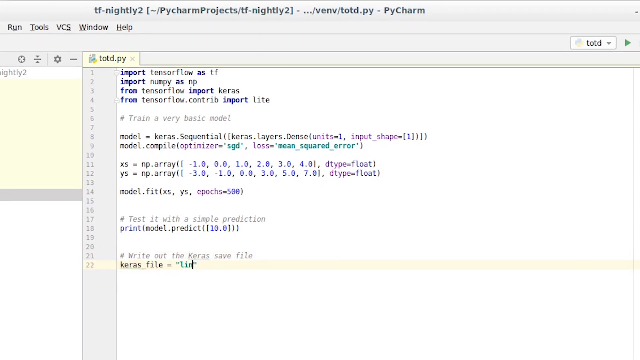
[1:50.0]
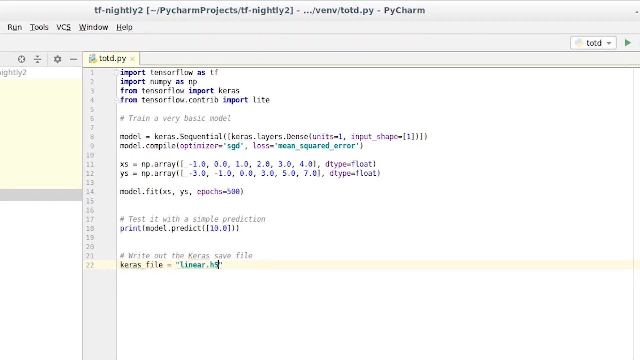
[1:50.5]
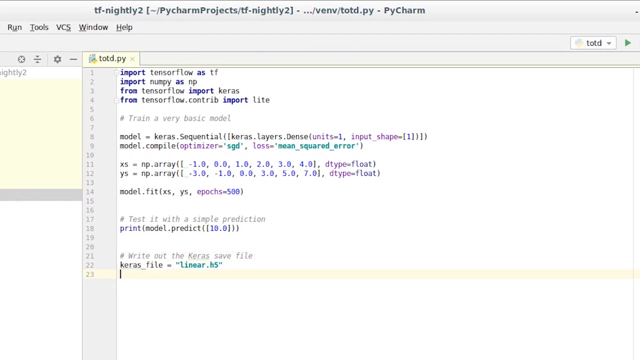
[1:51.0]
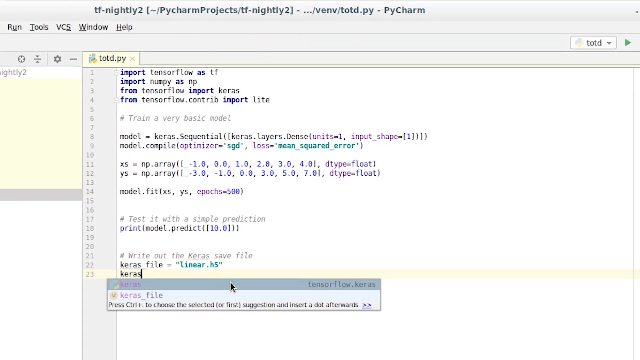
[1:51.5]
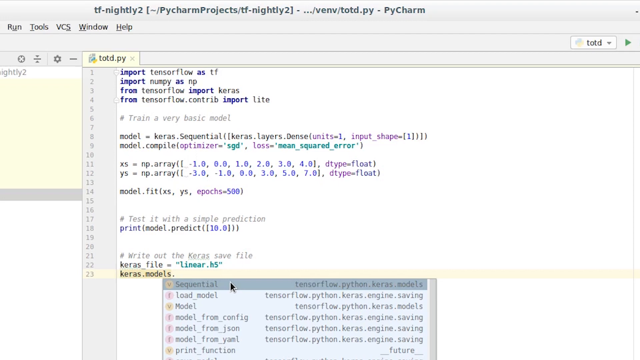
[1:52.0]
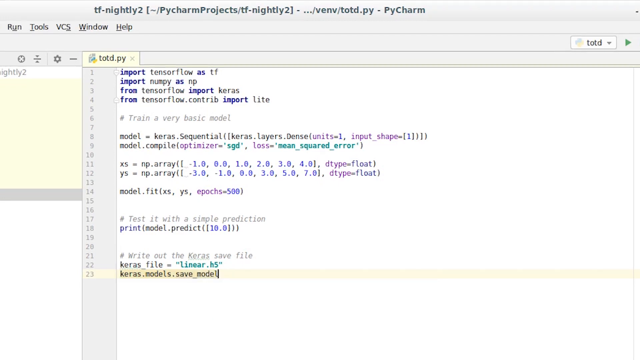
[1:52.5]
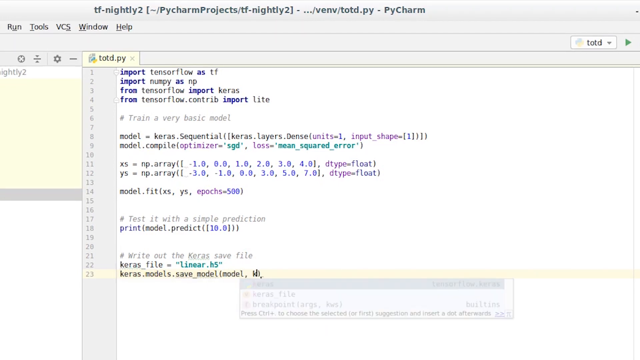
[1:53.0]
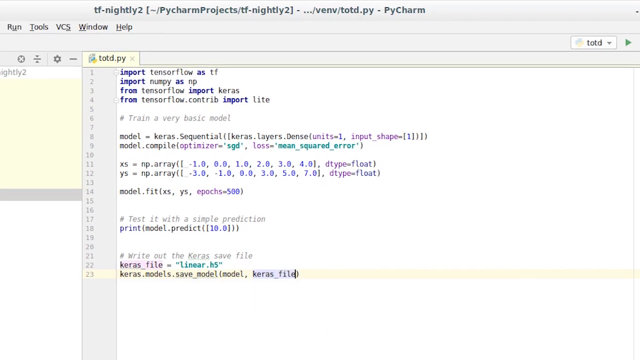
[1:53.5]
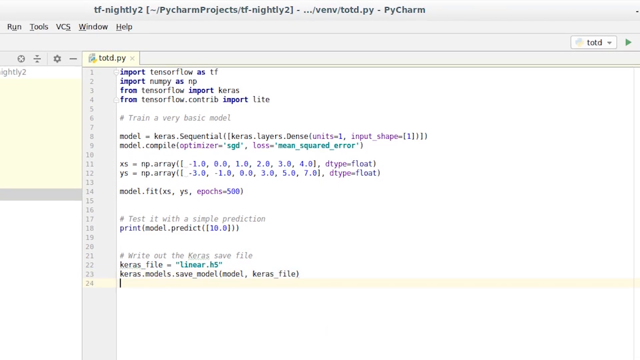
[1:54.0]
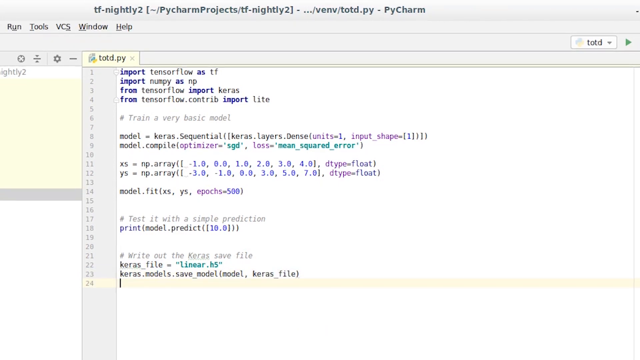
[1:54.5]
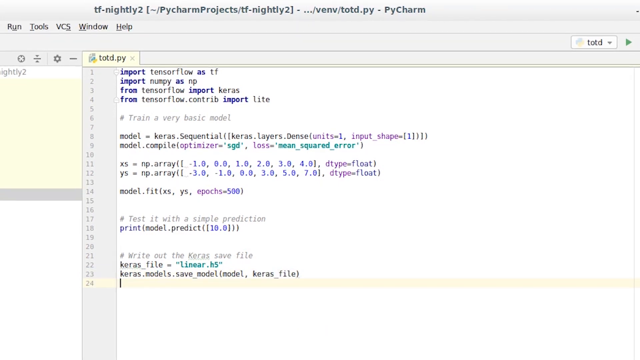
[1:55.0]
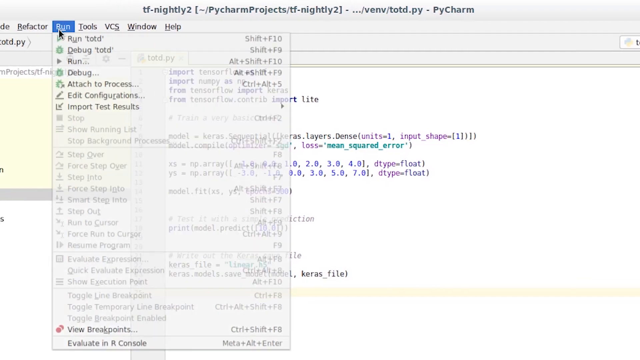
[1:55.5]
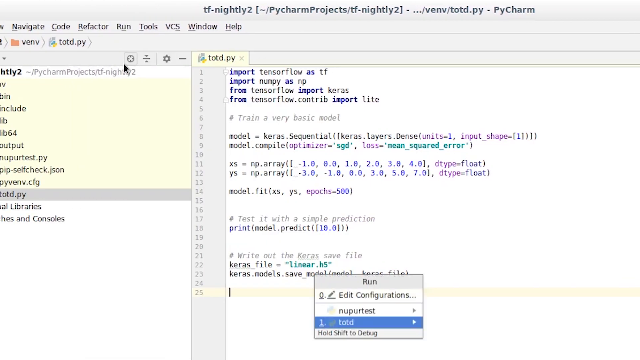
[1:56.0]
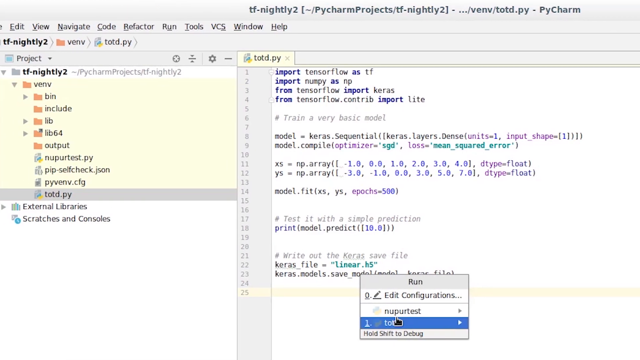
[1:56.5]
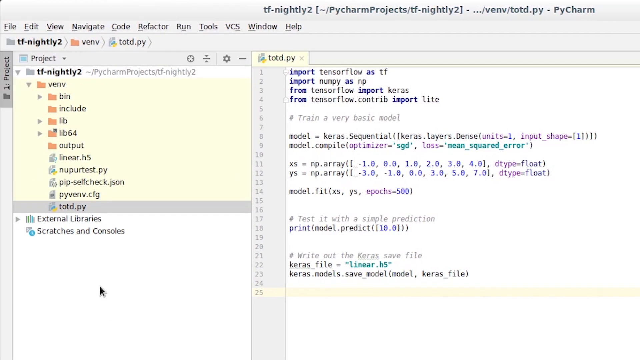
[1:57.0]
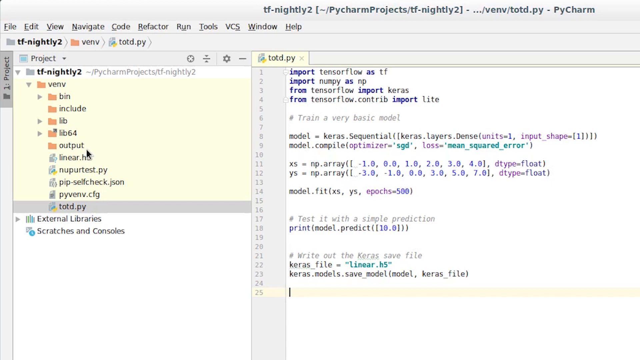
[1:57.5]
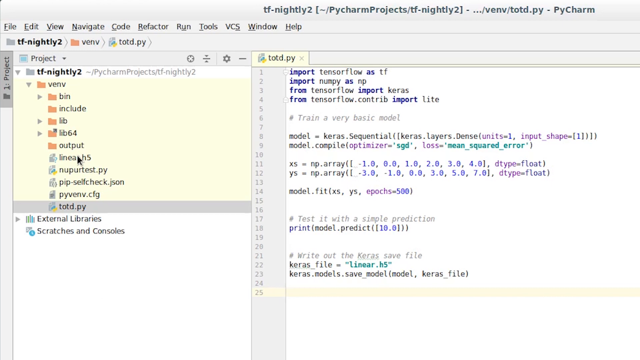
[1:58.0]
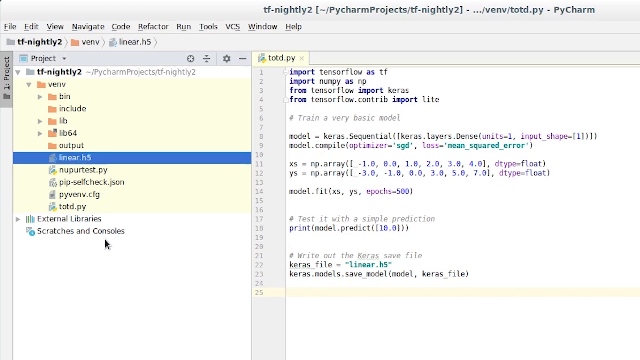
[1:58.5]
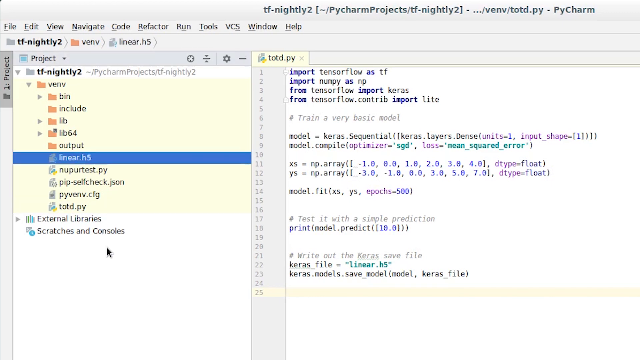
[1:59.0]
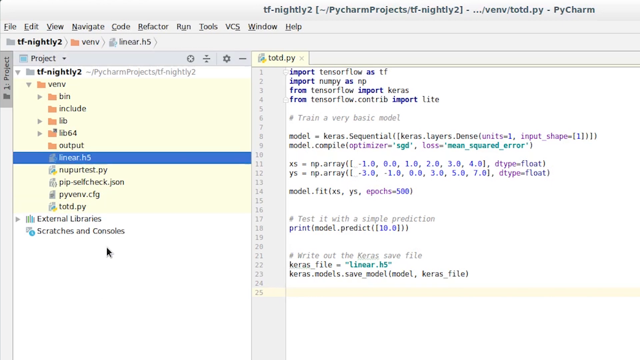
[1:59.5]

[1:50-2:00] A document page labeled "TF Nightly 2" shows code including "import tensorflow as tf" and "import numpy as np," followed by "# train a very basic model," "test it with a simple prediction" and "write out the Keras save file." Someone appears to be writing code to test it on the model. They run the tests and click on a document named "linear."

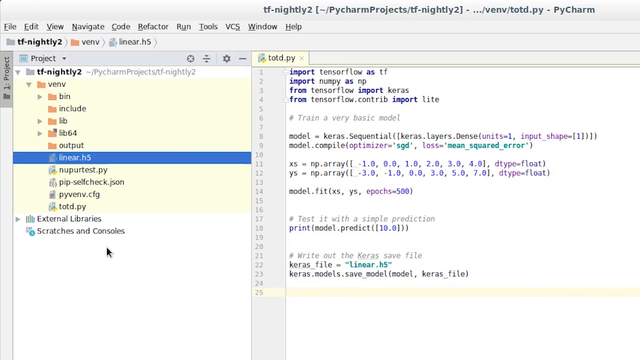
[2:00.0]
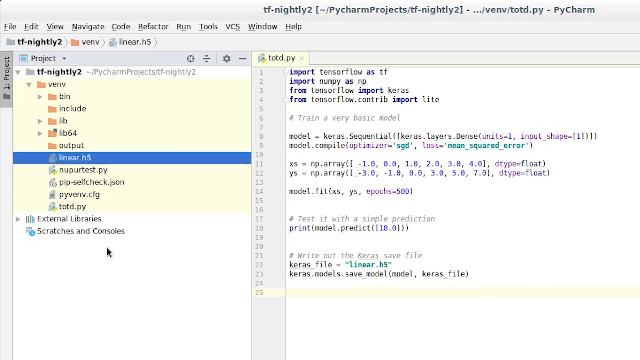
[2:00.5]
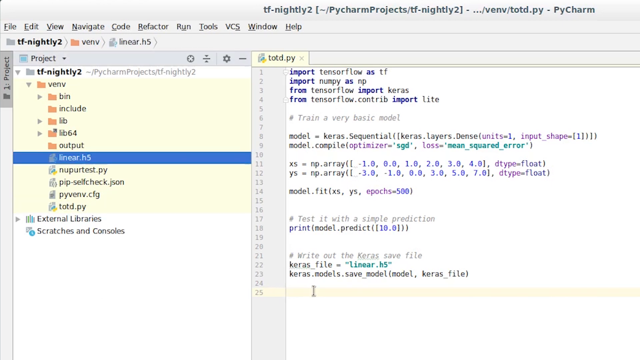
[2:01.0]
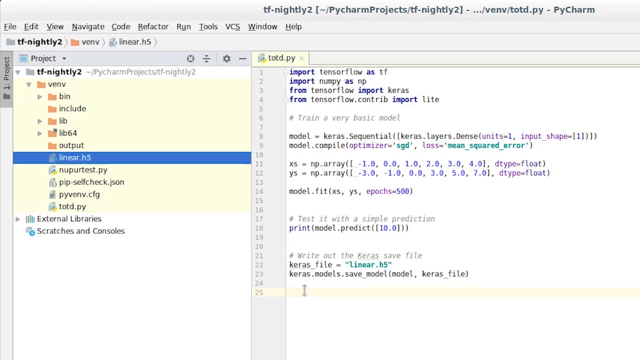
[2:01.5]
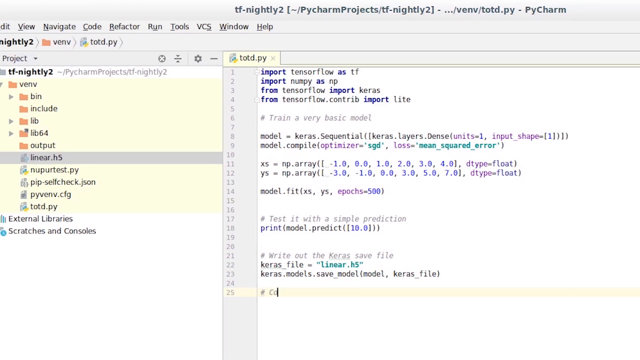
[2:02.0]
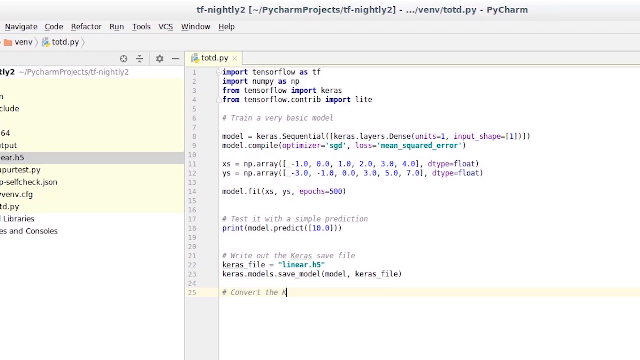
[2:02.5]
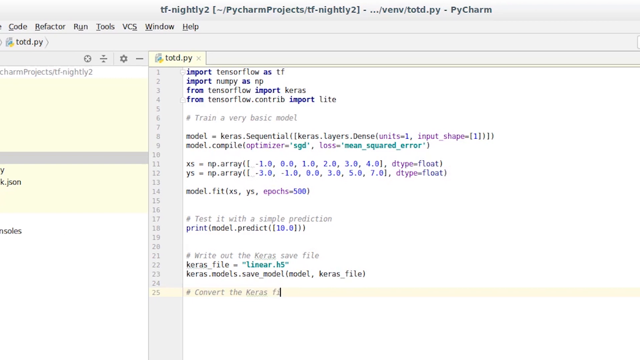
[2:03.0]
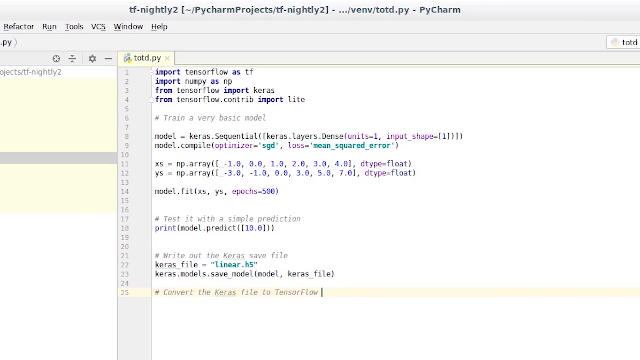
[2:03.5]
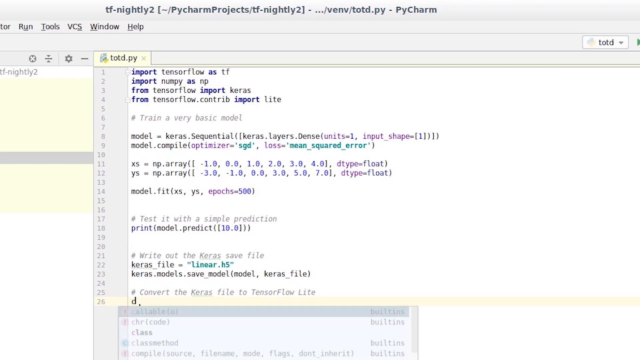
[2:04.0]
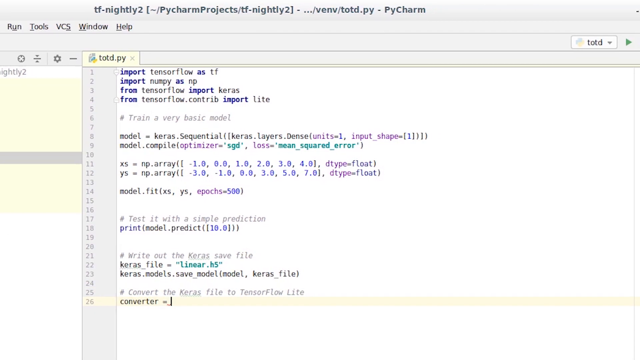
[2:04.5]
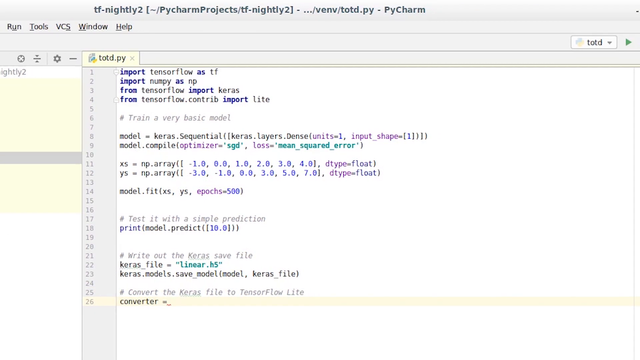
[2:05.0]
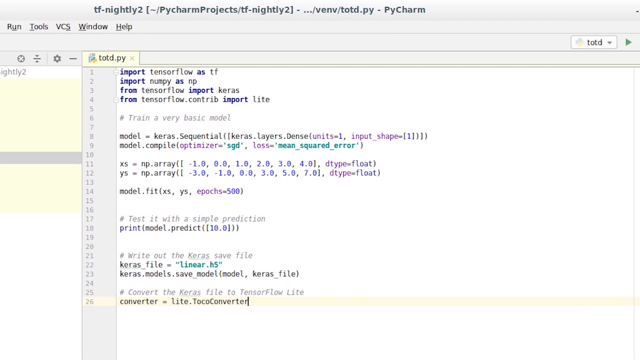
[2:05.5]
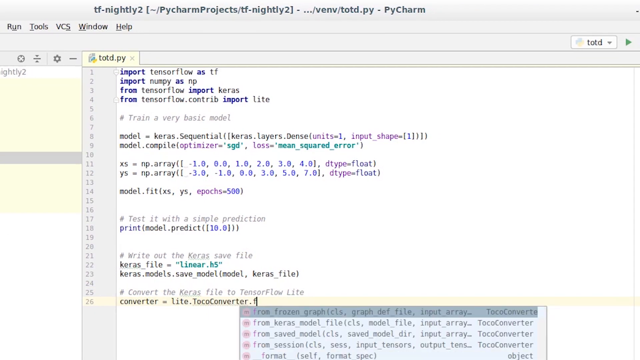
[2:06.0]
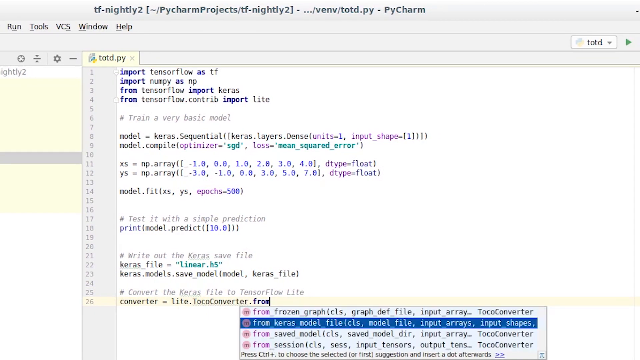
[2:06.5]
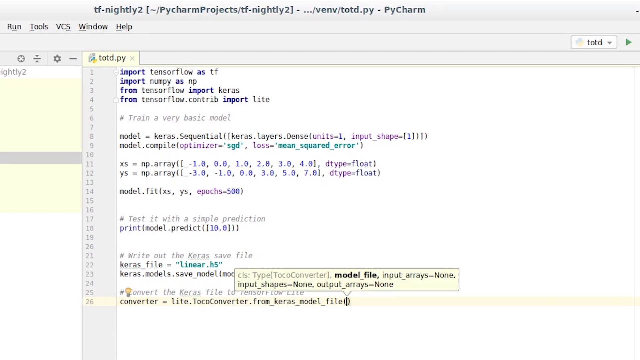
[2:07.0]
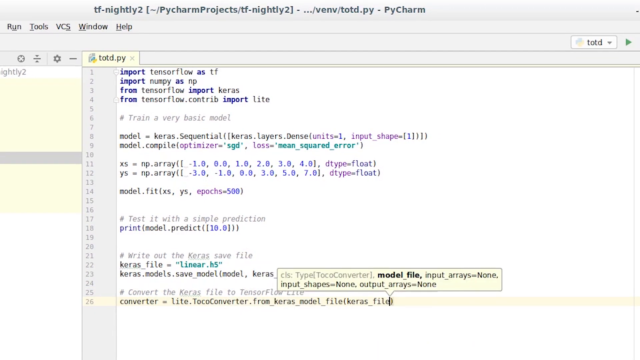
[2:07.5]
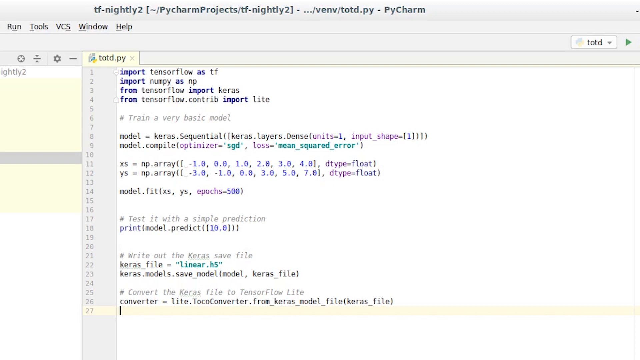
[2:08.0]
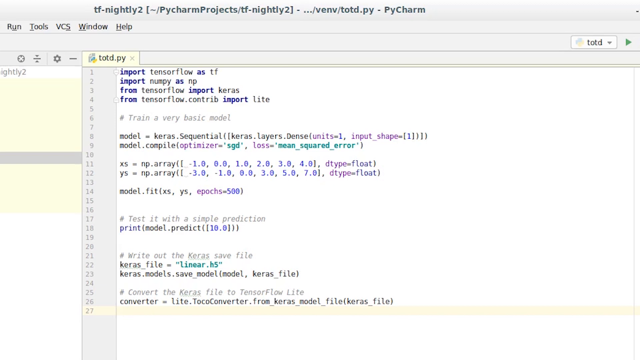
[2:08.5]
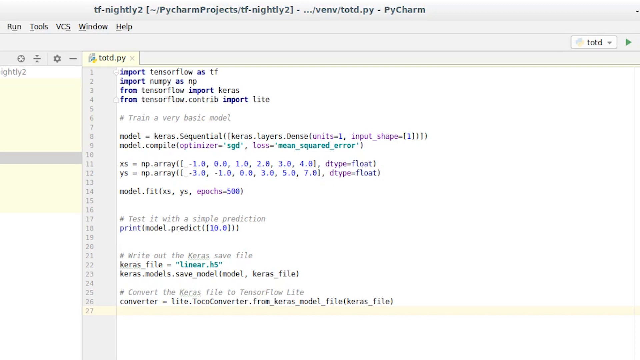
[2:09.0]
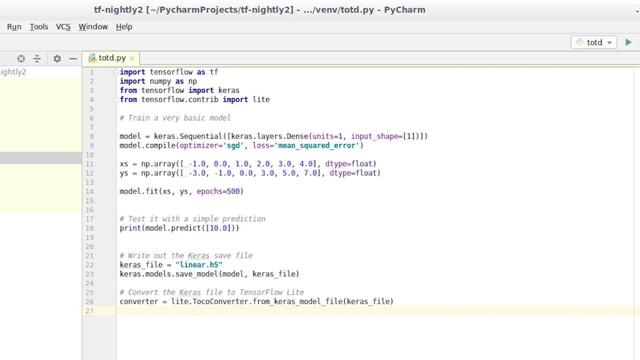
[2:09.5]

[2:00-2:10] A document or web page labeled "TF Nightly 2" shows "# train a very basic model," "test it with a simple prediction" and "write out the Keras" save file. The person is about to click on another document under the TF Nightly 2 folder, named "linear.h5." A line then reads "convert the Keras file to TensorFlow Lite."